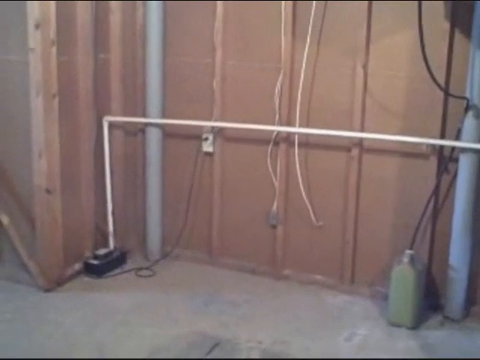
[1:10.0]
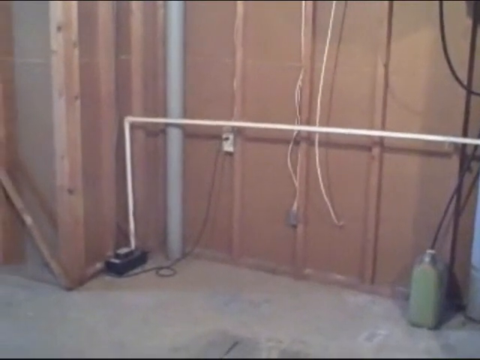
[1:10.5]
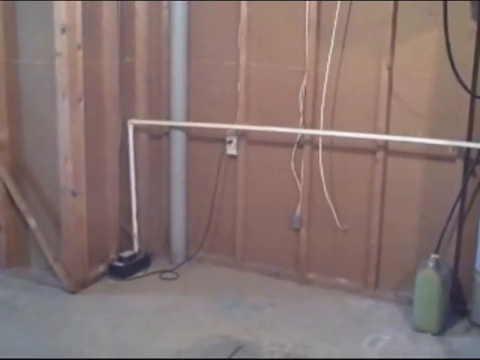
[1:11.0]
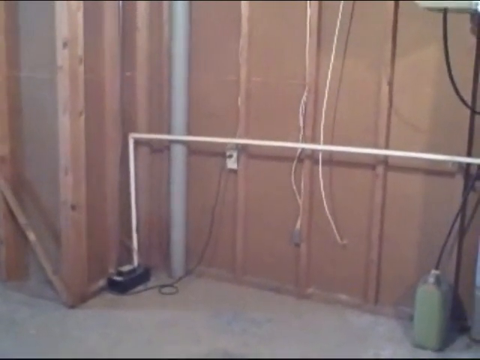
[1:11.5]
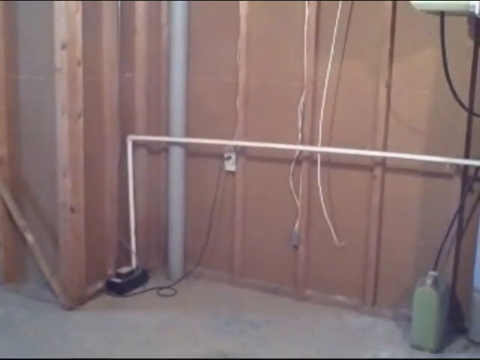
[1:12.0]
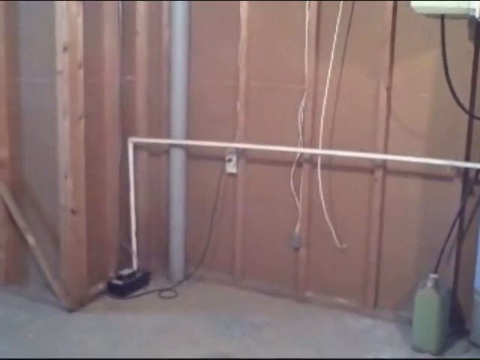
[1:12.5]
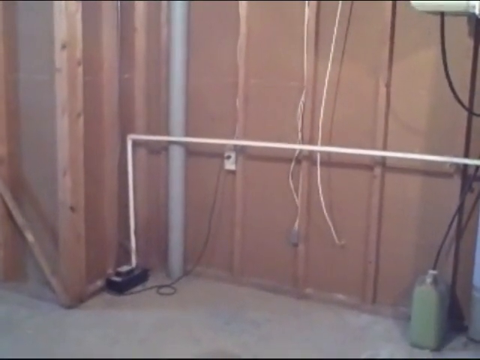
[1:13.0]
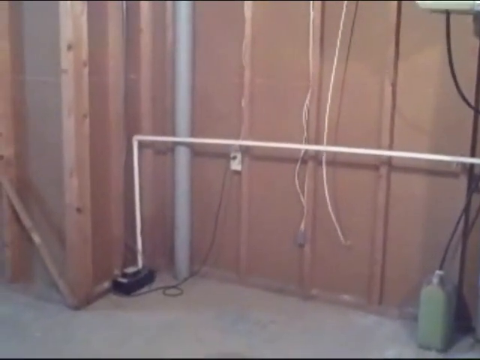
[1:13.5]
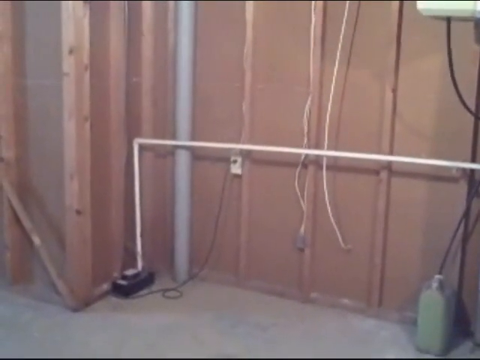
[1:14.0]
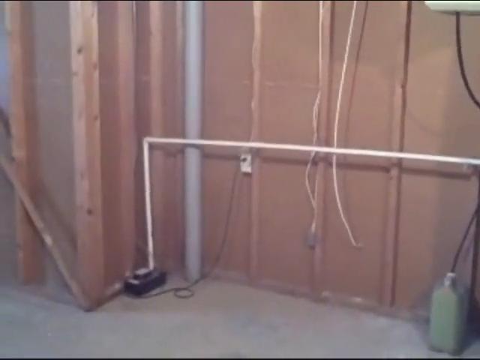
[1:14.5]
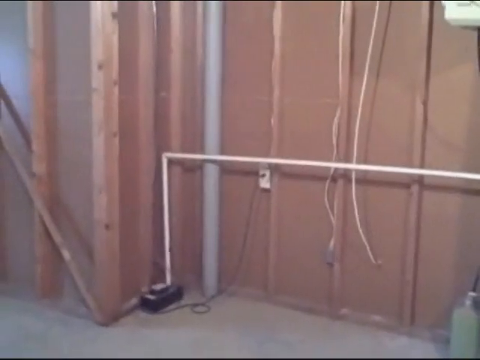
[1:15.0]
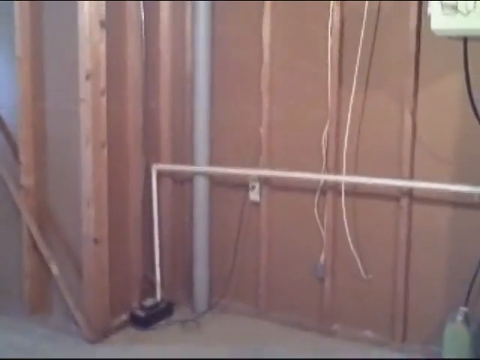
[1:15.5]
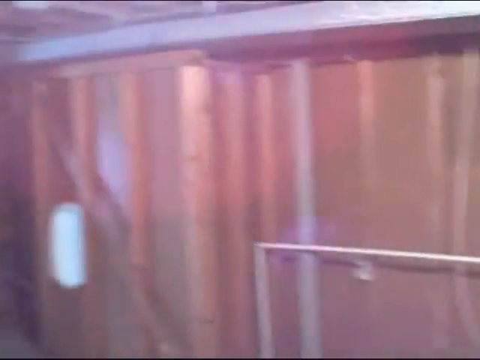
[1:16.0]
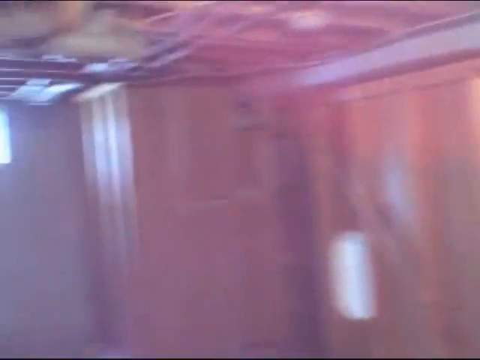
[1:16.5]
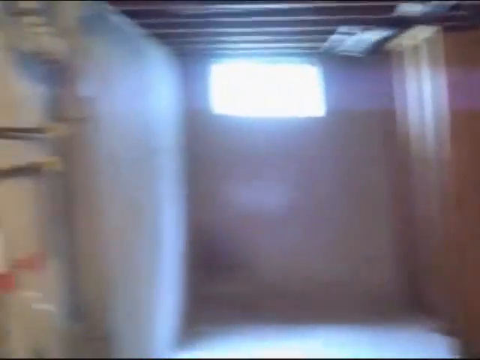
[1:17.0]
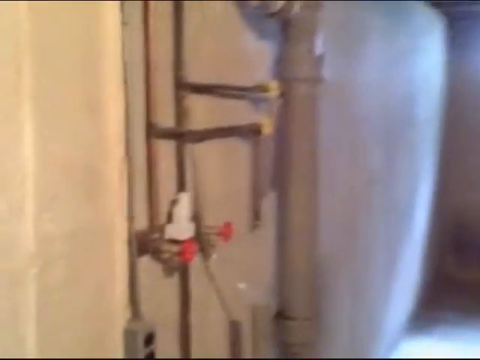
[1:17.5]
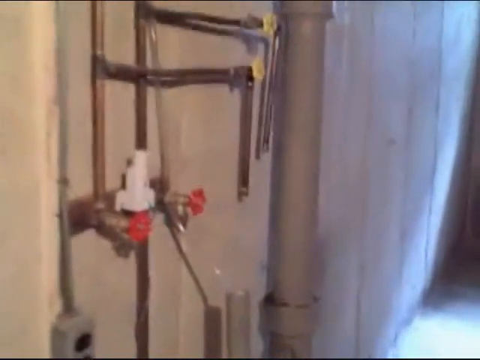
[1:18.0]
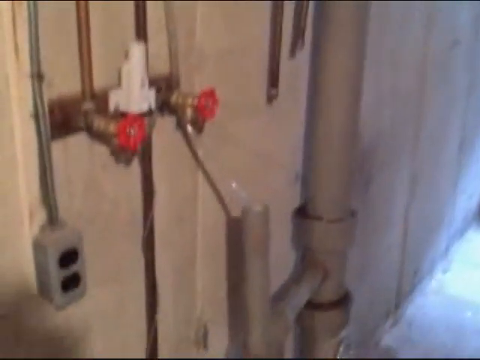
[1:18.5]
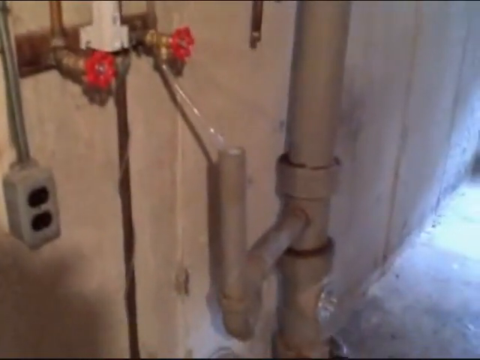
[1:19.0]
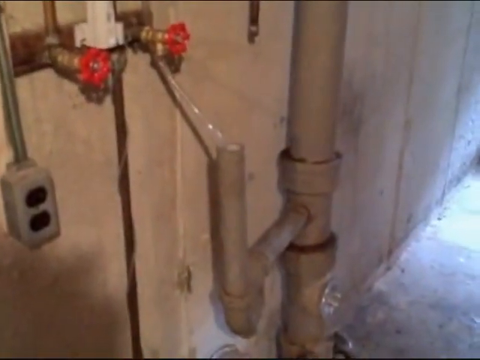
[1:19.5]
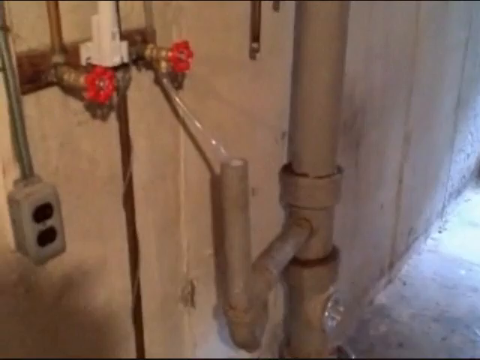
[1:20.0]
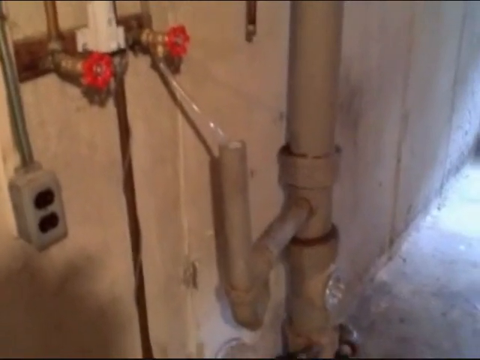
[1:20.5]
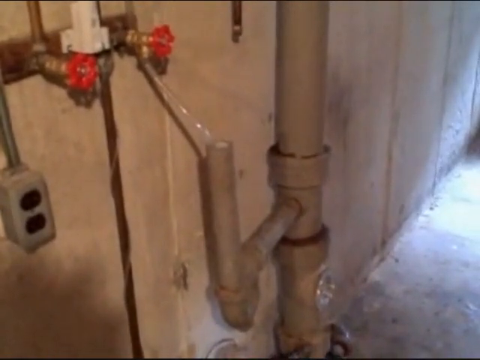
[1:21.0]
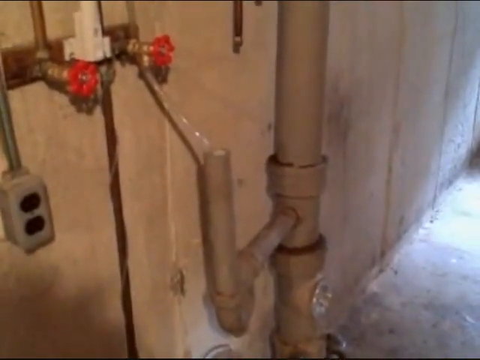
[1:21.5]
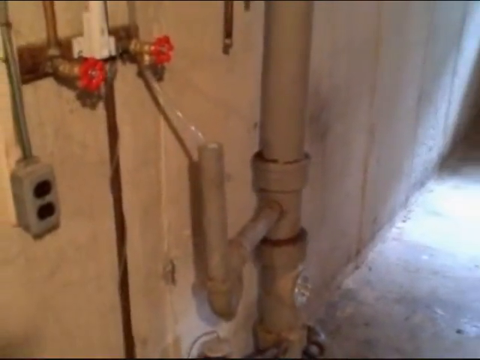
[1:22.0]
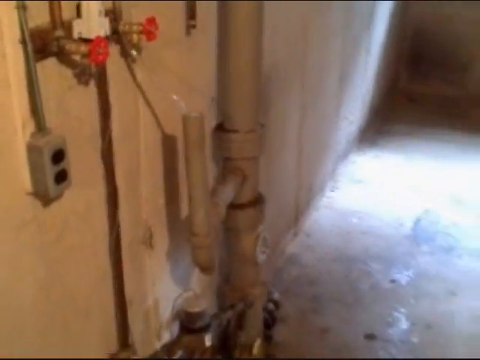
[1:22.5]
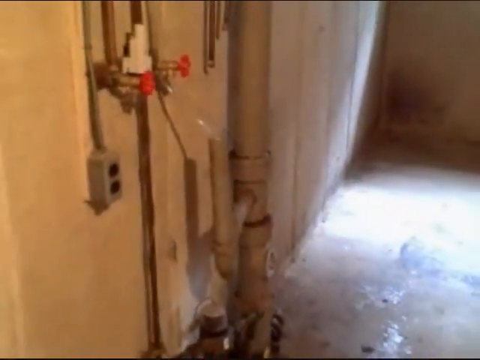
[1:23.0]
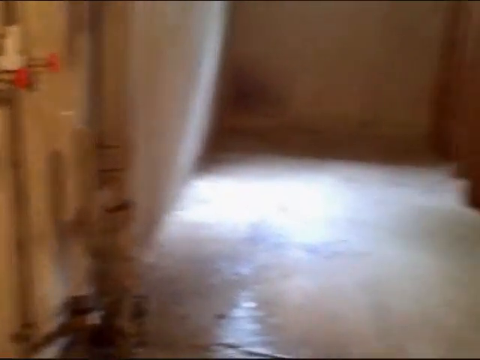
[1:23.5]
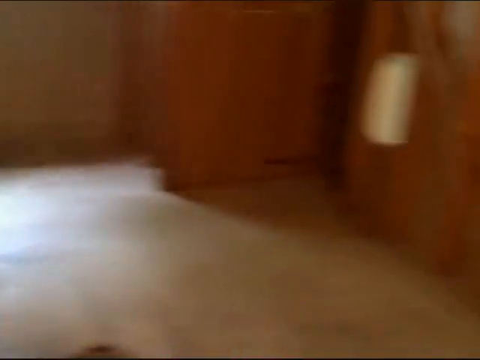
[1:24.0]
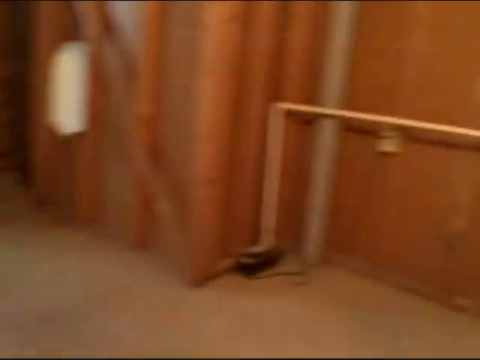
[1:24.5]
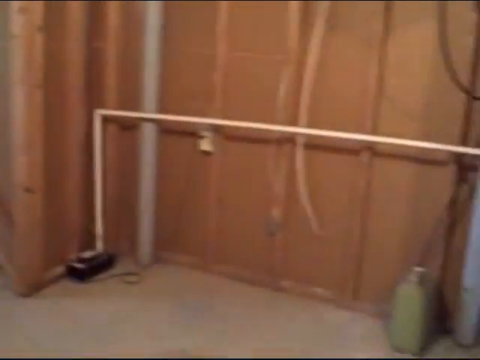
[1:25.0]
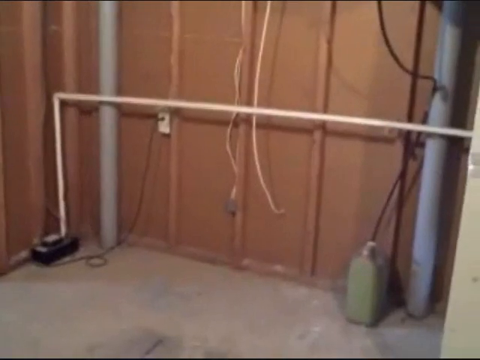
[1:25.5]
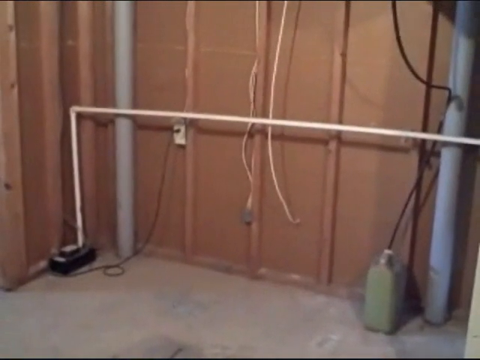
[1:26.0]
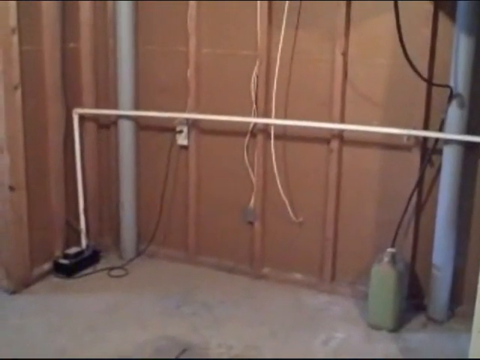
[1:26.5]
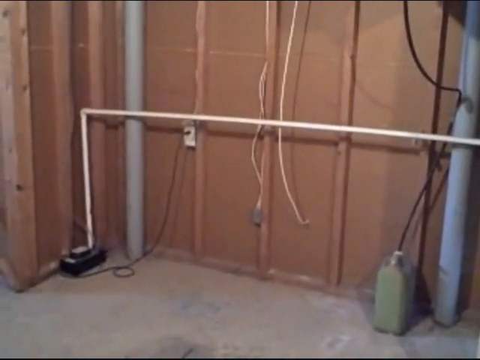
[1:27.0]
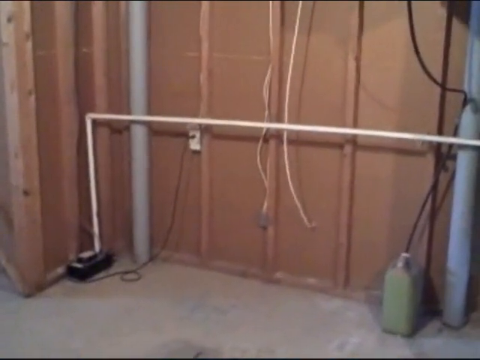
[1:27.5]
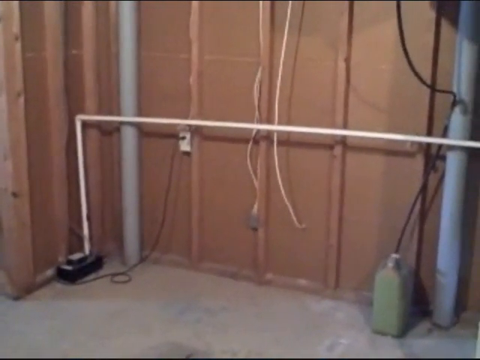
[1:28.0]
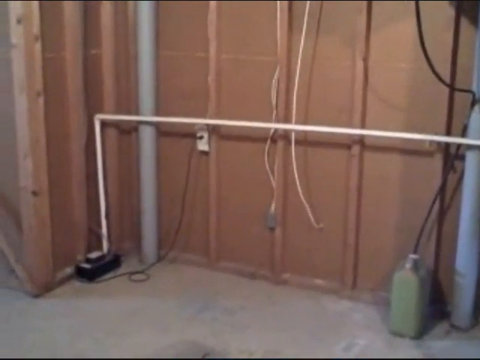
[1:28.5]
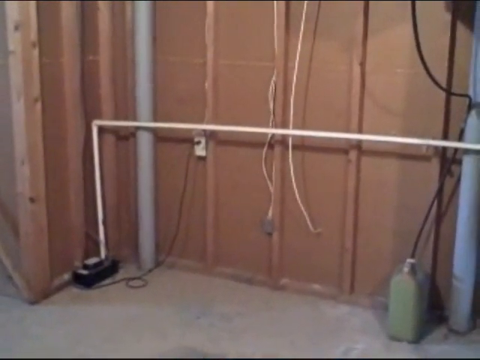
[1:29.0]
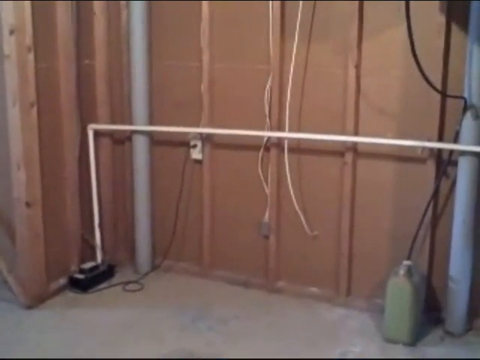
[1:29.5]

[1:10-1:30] The video shows a particularly small room full of pipes and cables, presumably a basement connected to sewers and pipelines; the person filming apparently is trying to fix these pipelines. There is some tiling, a small window on the side, and red interior and painting. A geyser is on top with some cables, along with a sewer line. The camera does not show the room upwards, so the lights are not visible, but it shows the size of the room and its colour. Some pipes are hard to see because of the camera quality.